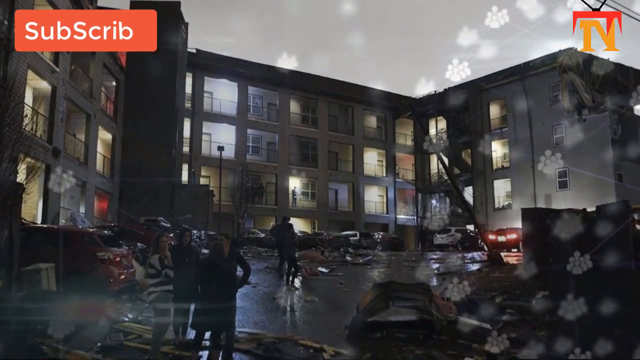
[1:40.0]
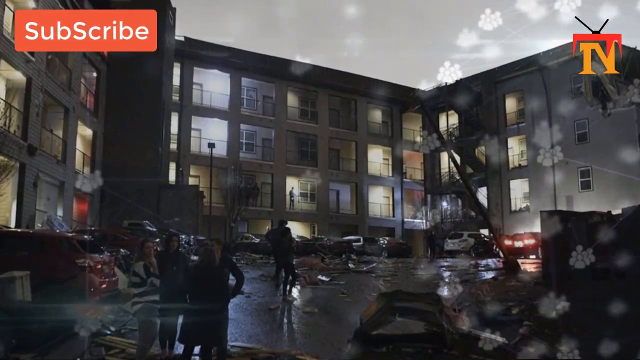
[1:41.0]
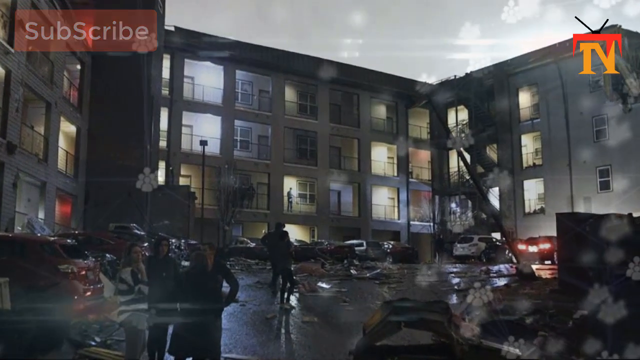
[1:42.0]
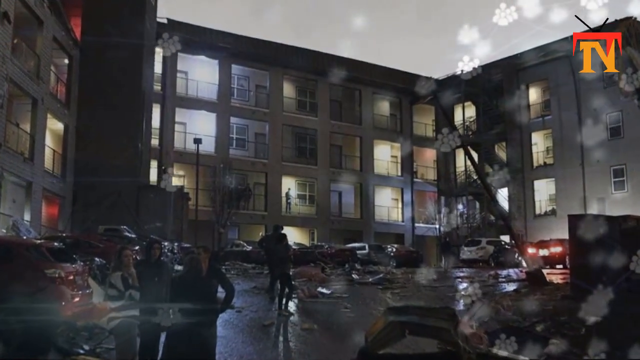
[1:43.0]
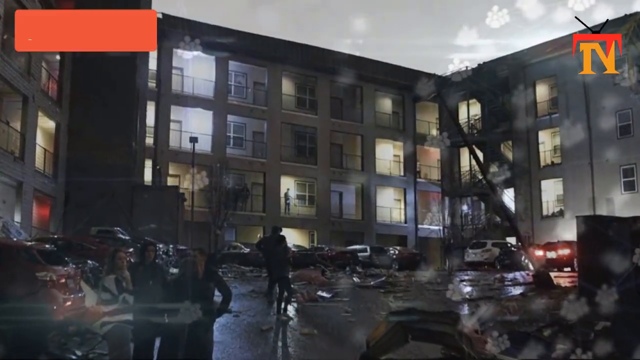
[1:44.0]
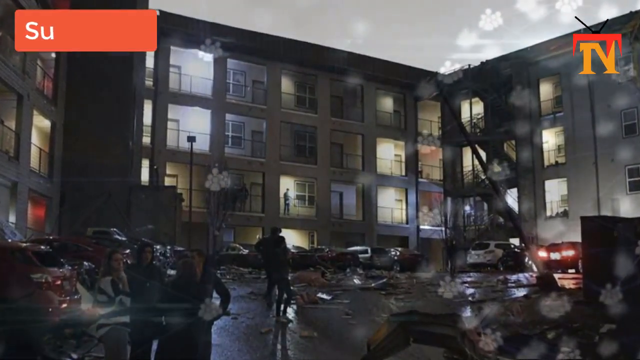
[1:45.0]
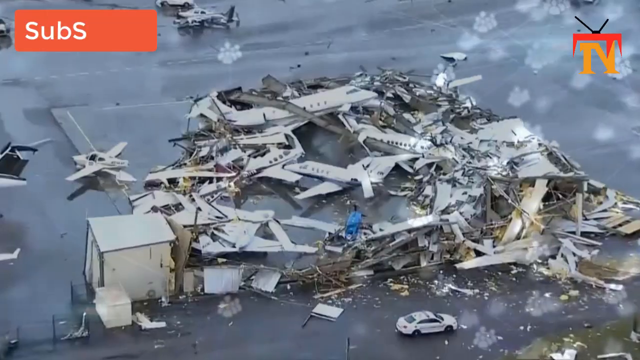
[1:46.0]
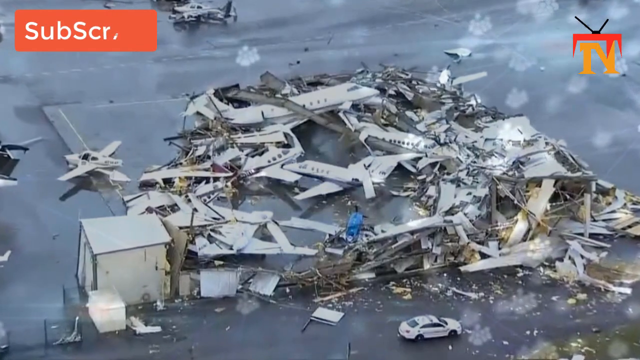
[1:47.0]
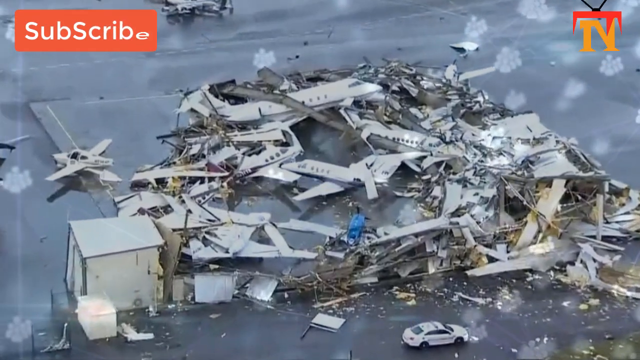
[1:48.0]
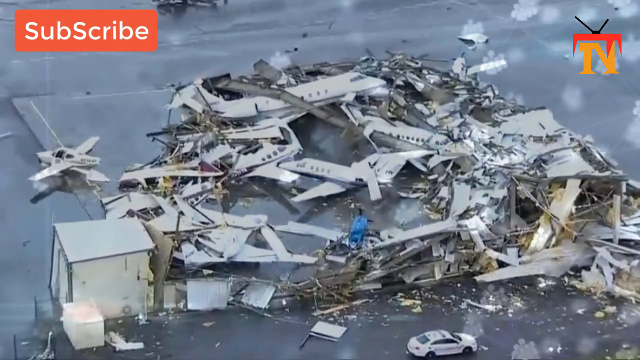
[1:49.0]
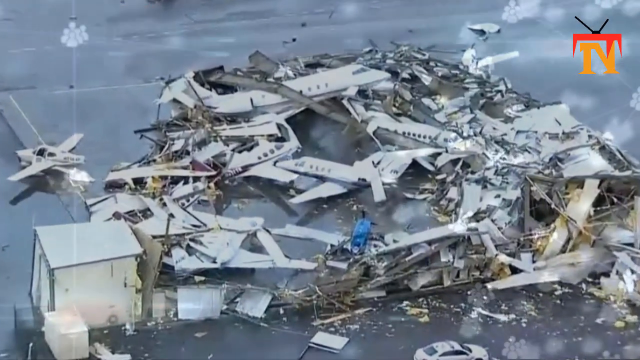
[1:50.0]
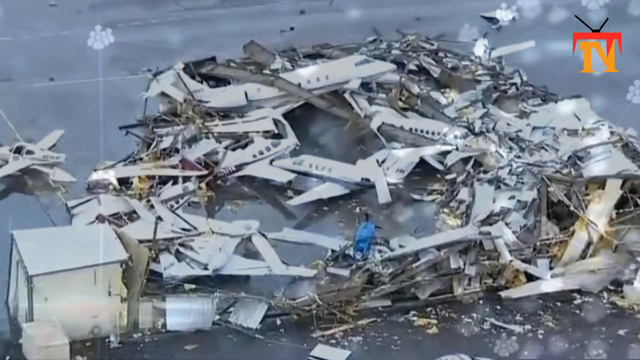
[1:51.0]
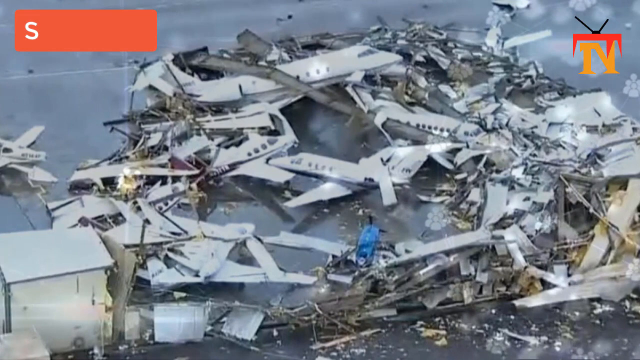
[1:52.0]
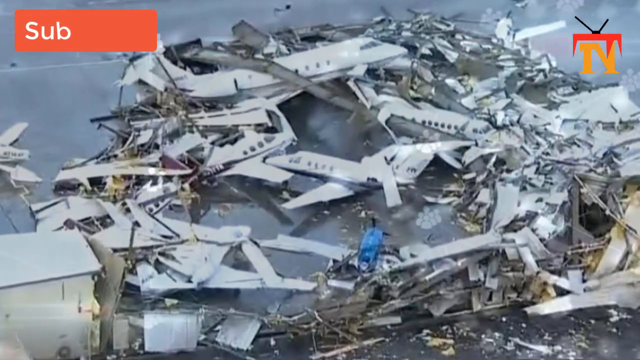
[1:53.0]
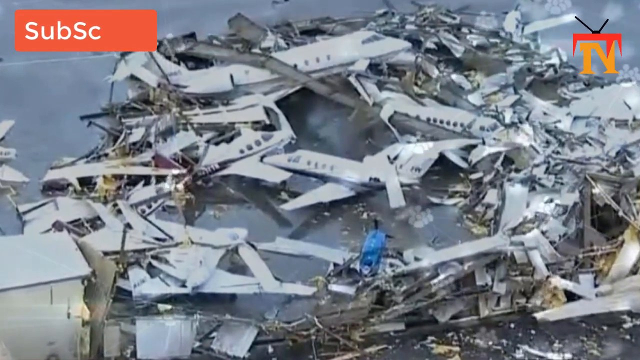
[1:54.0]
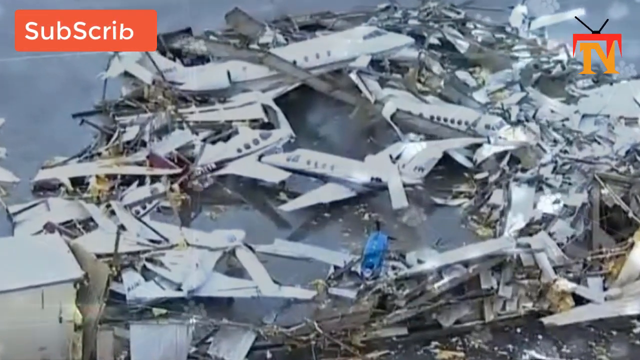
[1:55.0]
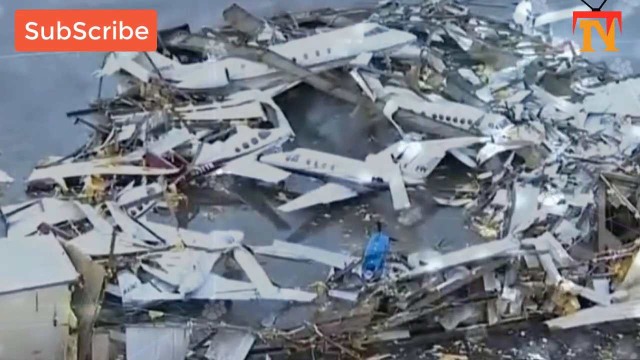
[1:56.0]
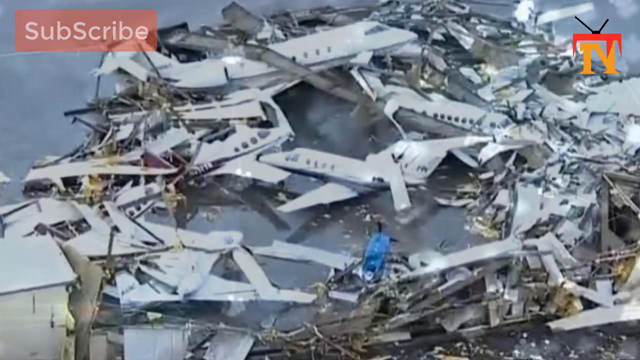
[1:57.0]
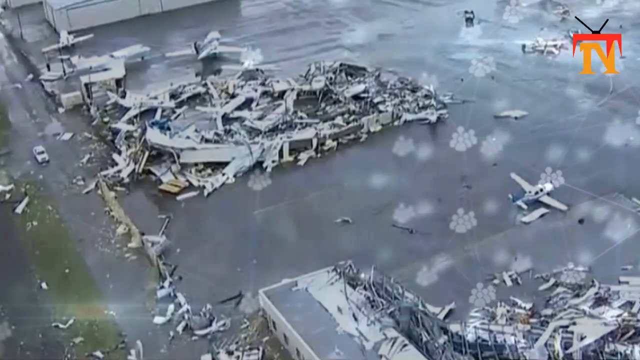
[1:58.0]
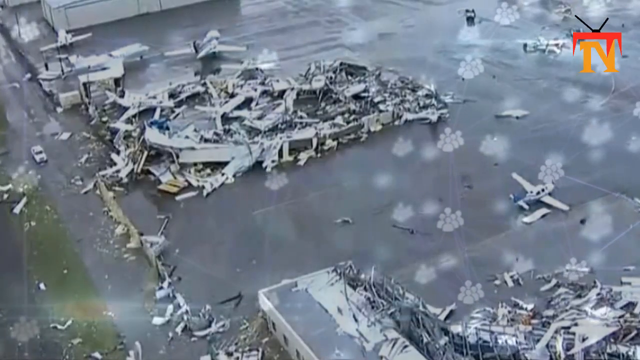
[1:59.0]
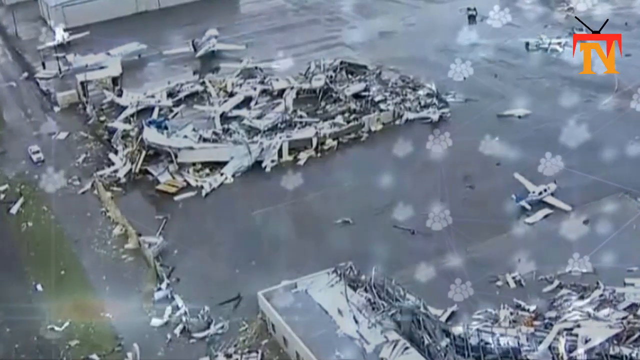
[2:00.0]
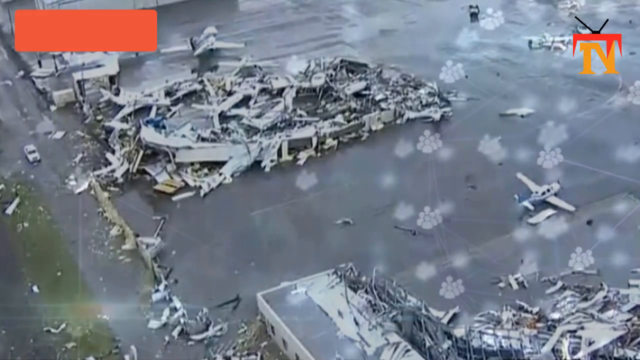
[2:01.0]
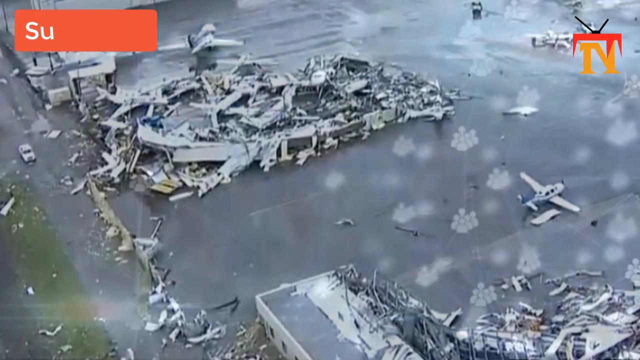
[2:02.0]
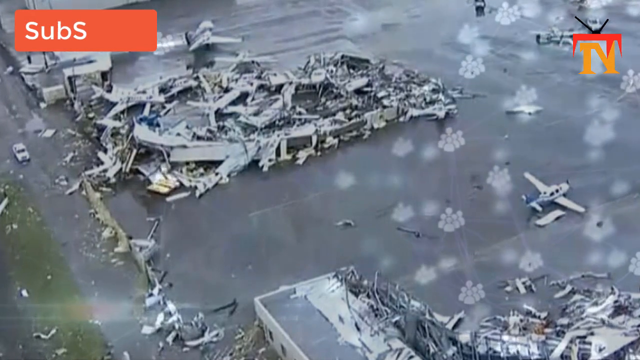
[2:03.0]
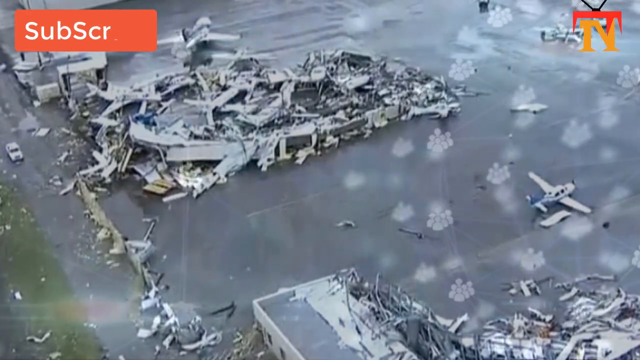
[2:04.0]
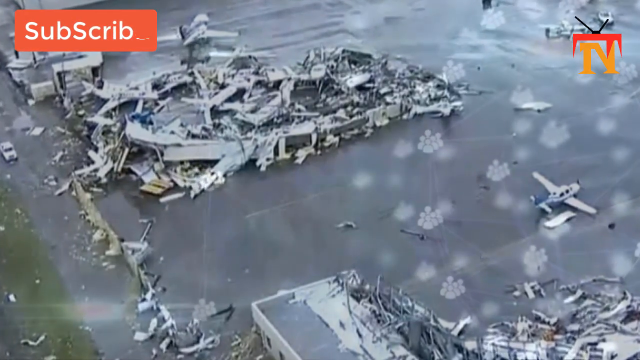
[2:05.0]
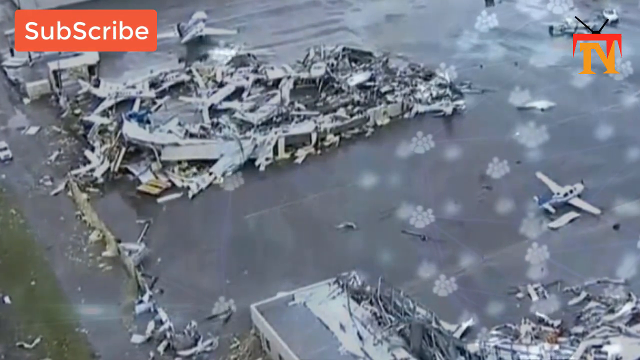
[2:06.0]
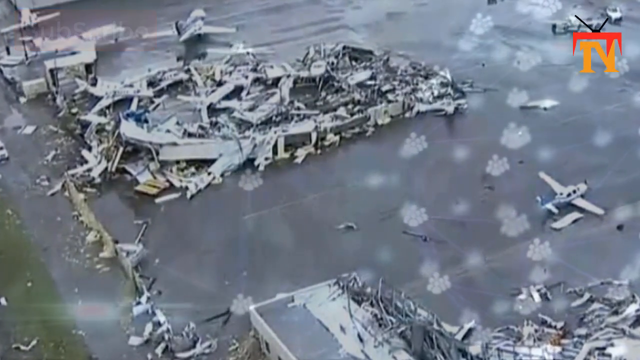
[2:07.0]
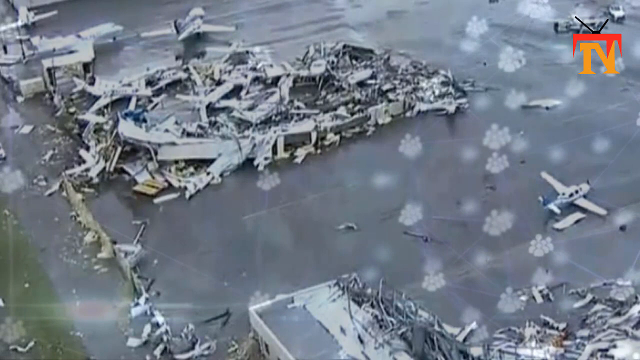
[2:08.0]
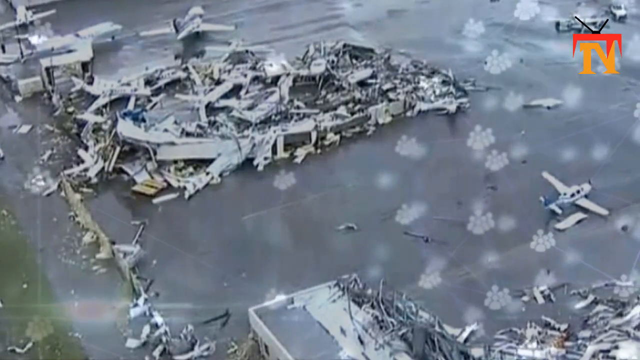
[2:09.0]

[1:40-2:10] A nighttime scene shows an apartment complex that appears to have four levels. People stand in the parking lot, where there is destruction throughout, with parts scattered across it. Multiple cars are parked in a square formation surrounding the apartment building, one on the far right with its lights on. Above, there appear to be clouds even though it is nighttime. The image is zoomed into at the center. The scene cuts to an overhead view of wreckage in a giant circle with an opening gap in the middle, on some sort of street pavement. The view is zoomed in to reveal multiple planes within the wreckage forming the circle. Another image of the same circle of plane wreckage shows planes on the outside of the wreckage that look okay, while the wreckage itself looks very distraught.